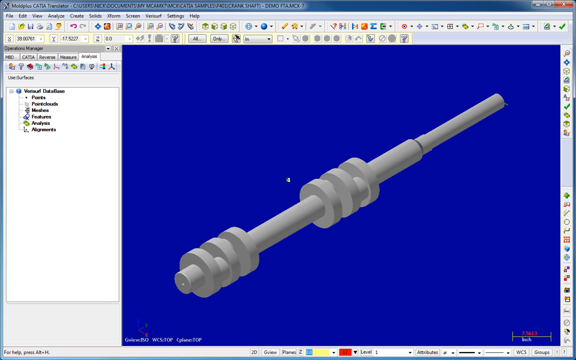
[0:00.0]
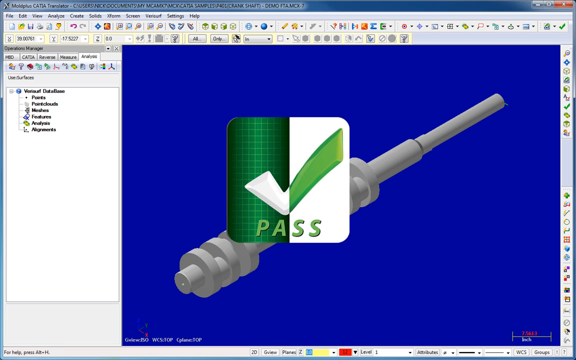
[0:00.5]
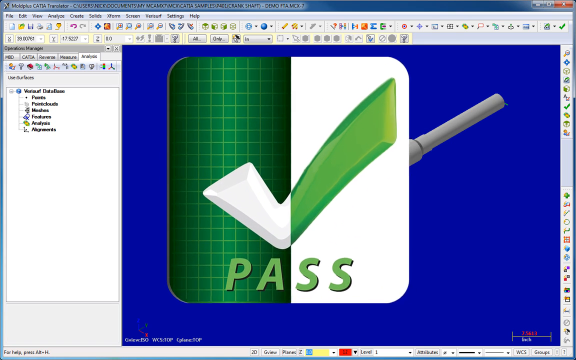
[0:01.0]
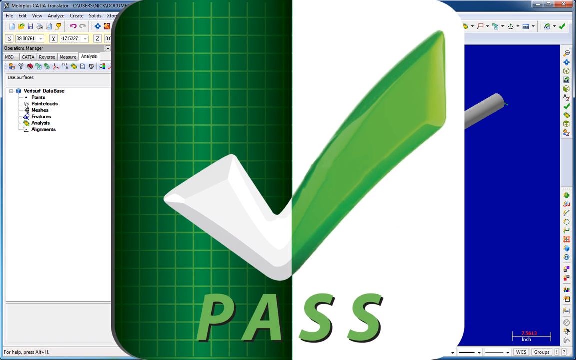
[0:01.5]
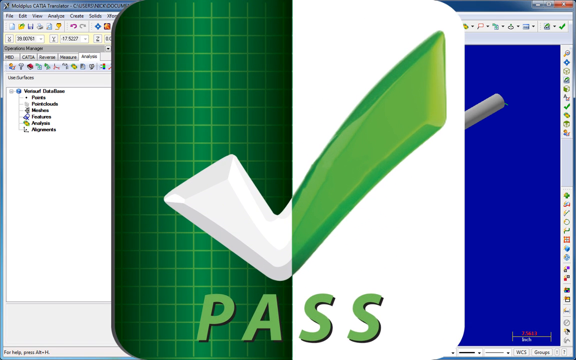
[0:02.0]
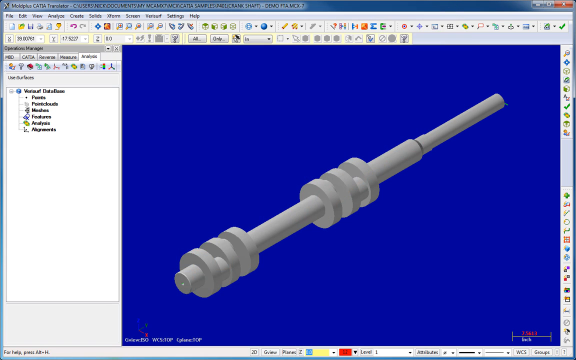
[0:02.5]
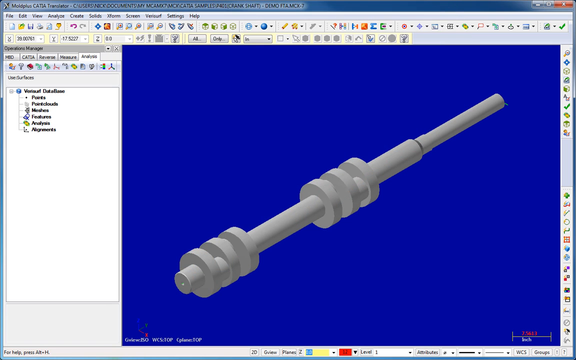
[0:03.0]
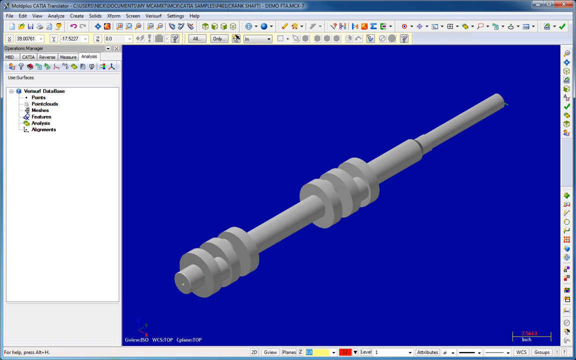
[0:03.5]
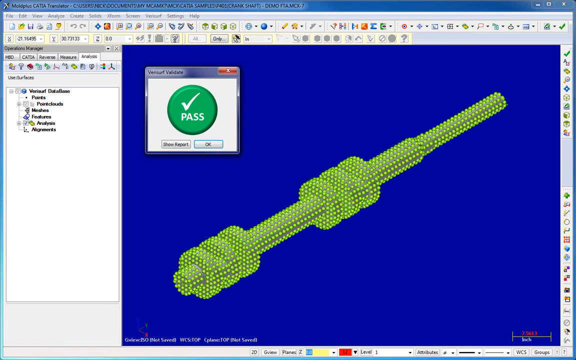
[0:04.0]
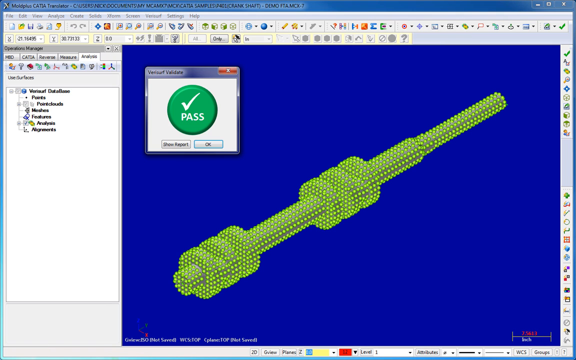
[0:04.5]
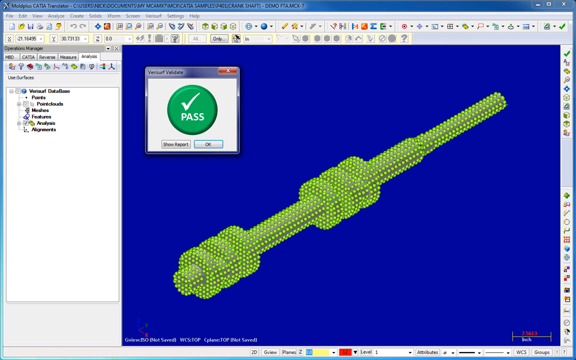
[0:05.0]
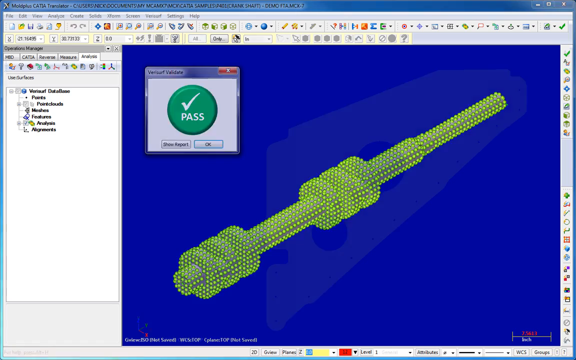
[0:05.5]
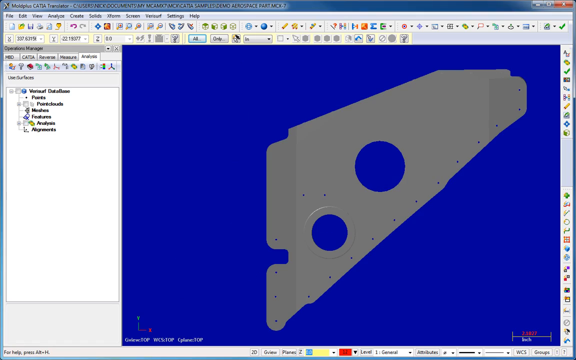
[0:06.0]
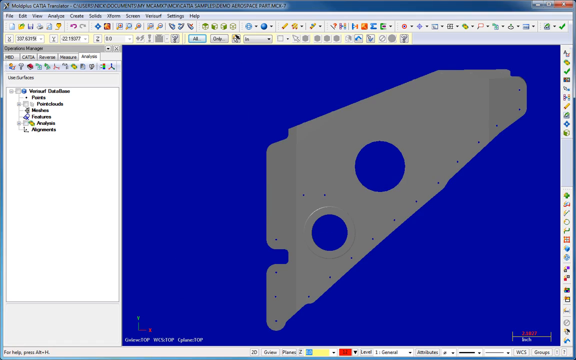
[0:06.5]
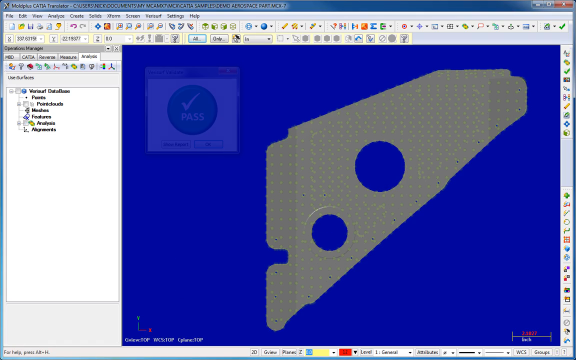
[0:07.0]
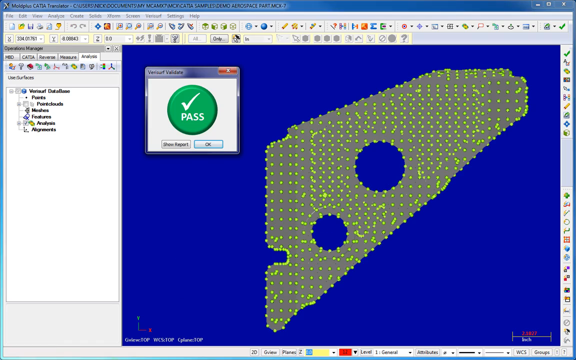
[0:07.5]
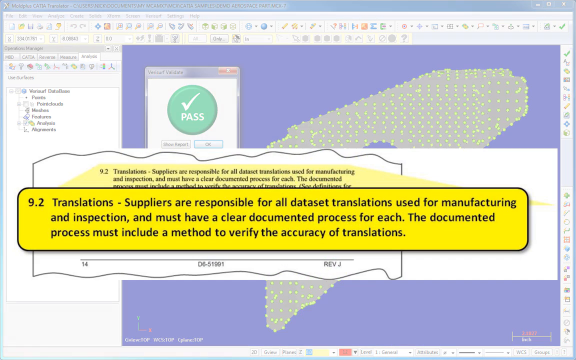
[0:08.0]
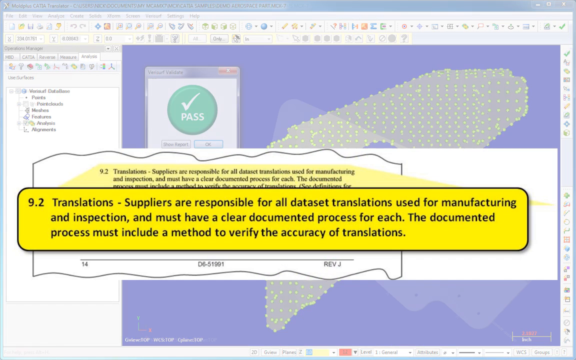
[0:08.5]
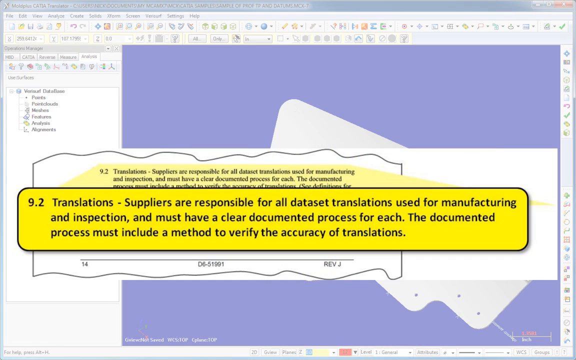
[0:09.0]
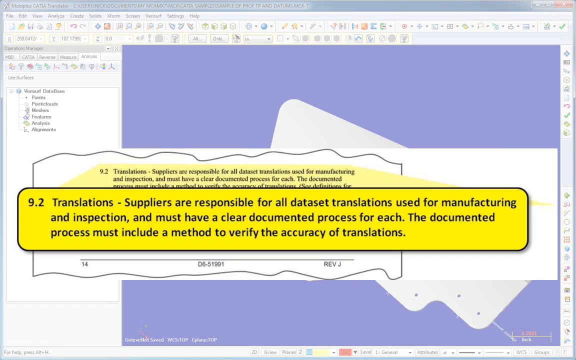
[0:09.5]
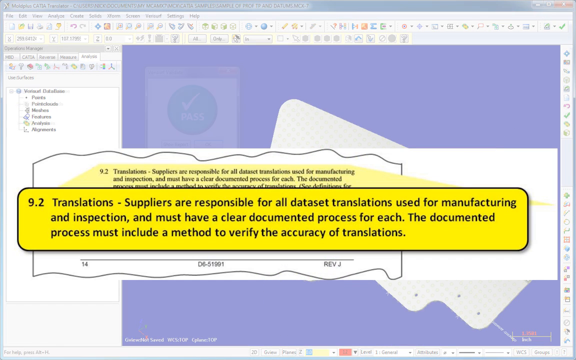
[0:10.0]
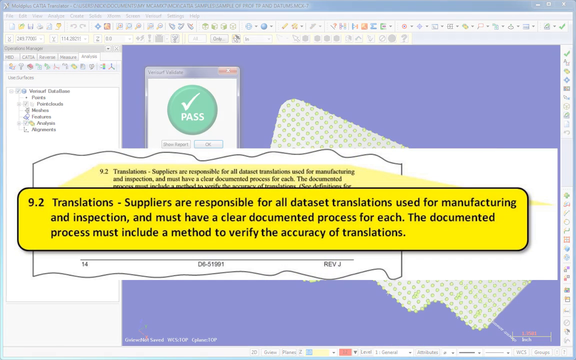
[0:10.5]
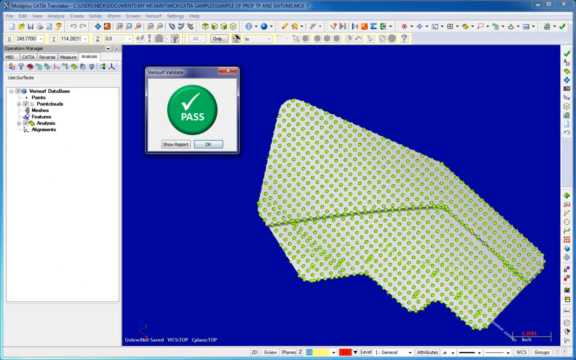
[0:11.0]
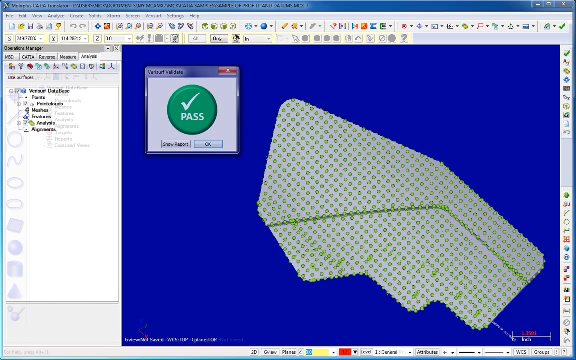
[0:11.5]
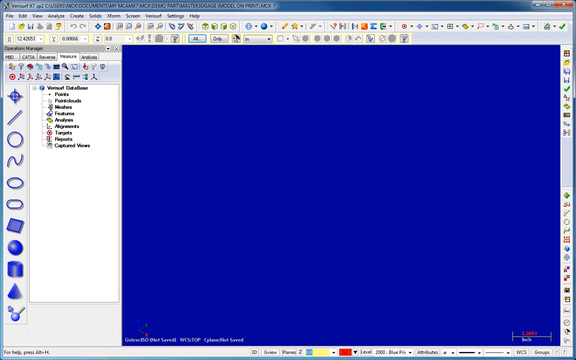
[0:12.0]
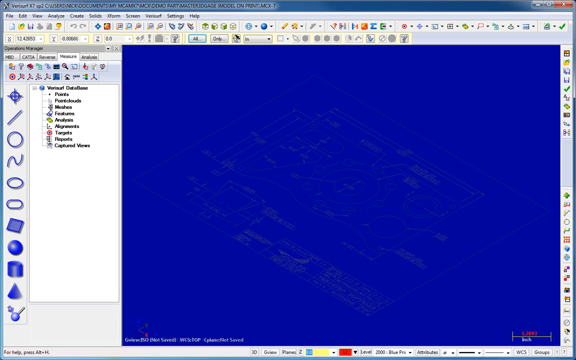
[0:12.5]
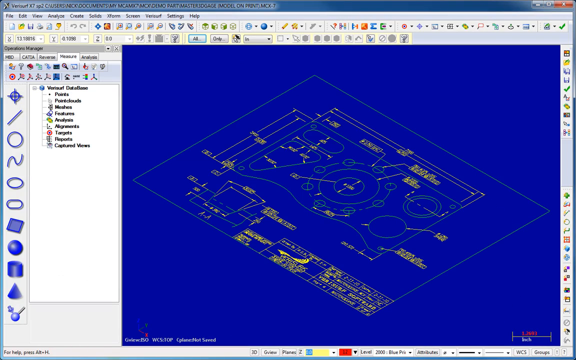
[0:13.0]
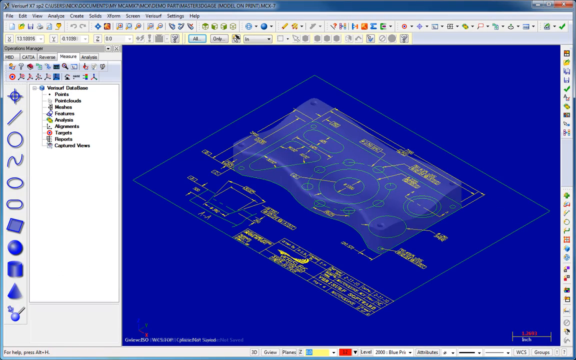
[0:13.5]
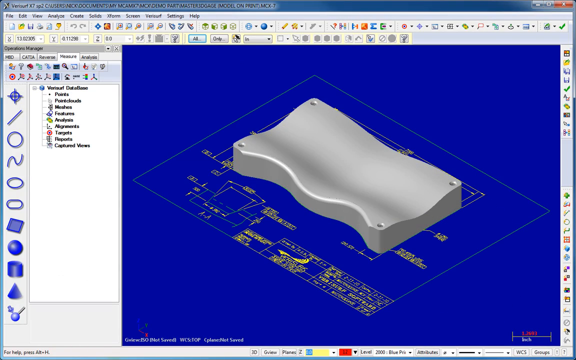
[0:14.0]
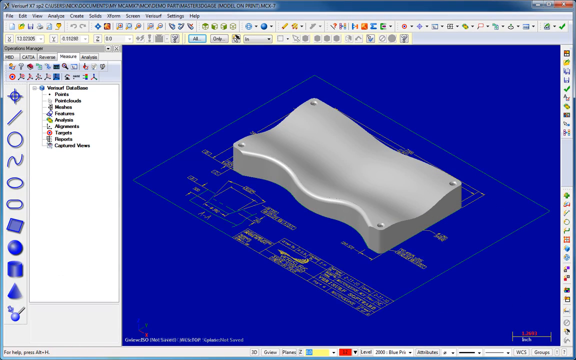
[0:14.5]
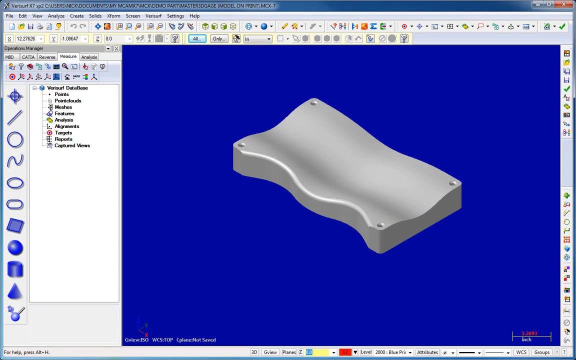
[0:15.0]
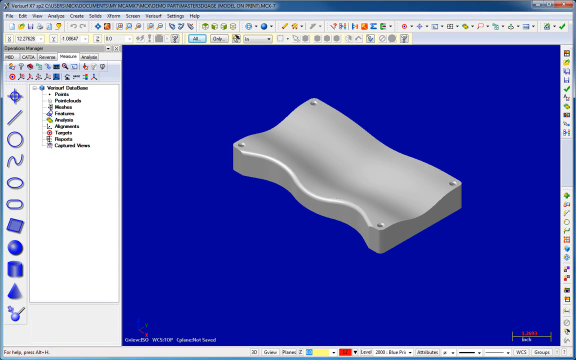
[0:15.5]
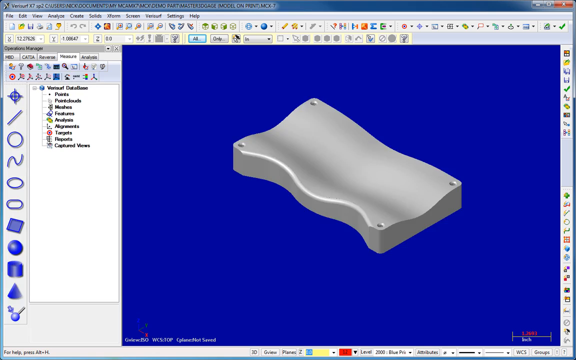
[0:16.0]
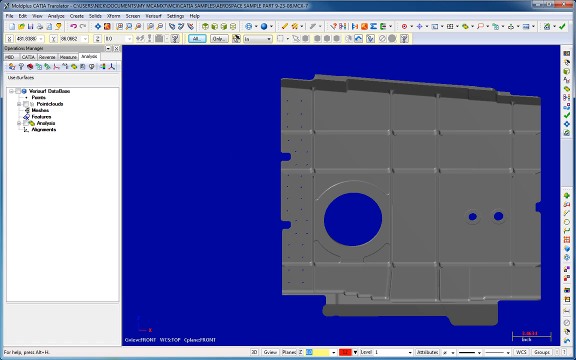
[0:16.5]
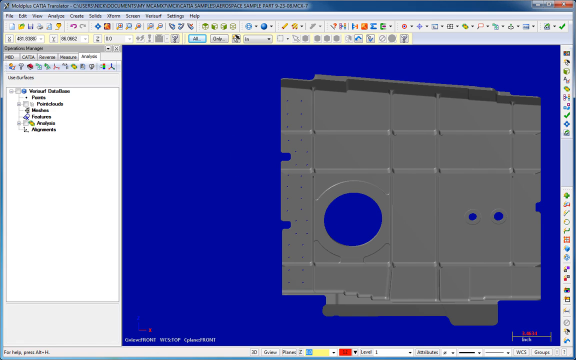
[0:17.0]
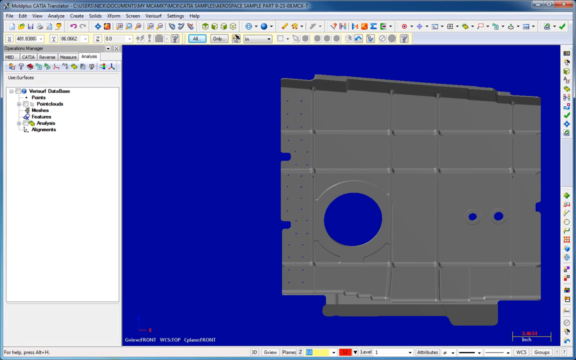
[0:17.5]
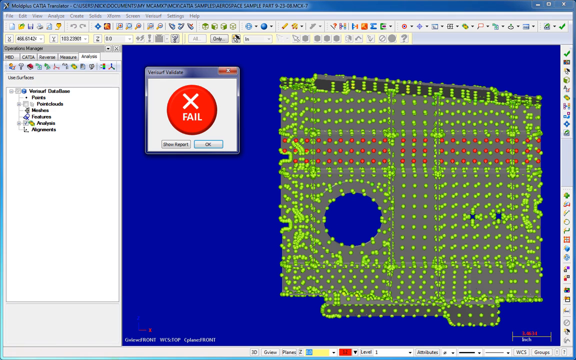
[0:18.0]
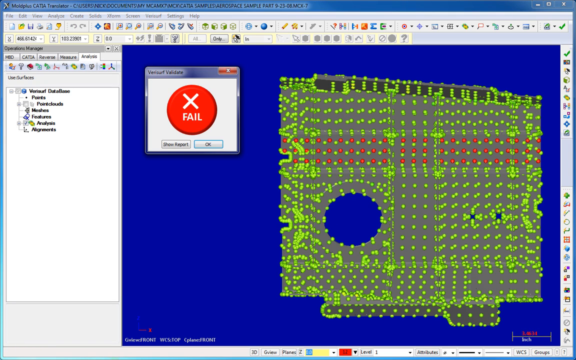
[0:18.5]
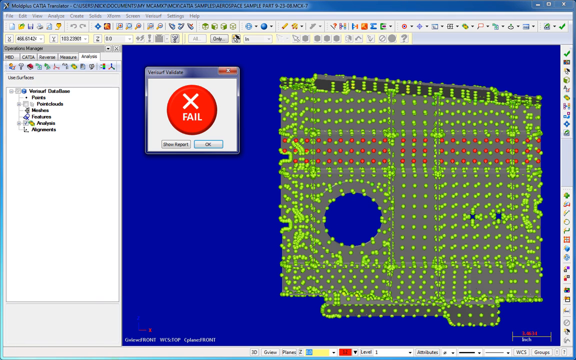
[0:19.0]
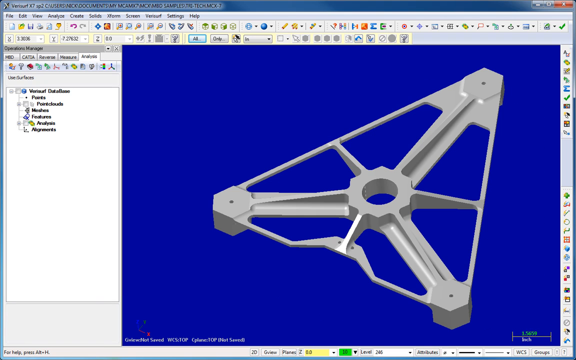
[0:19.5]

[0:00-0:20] The video appears to show a CAD design software program for checking parts against specifications. A part is displayed with a pass or fail sign. What appear to be various checking points are shown: portions of the part that are checked for contour or measurement specifications, with areas where the part does not meet specifications shown in red. The part seems to be checked over hundreds of portions for compliance. A part is also shown on top of a printed circuit board, and that part is measured for compliance with fitting on top of the board.